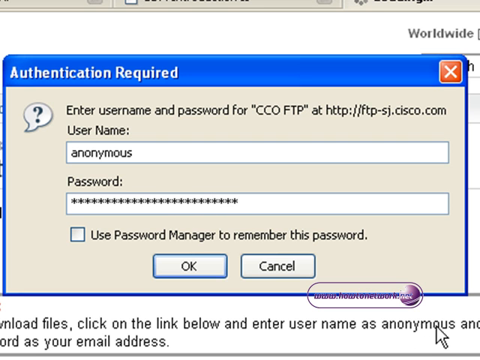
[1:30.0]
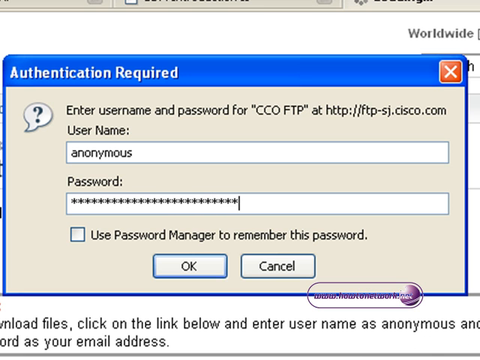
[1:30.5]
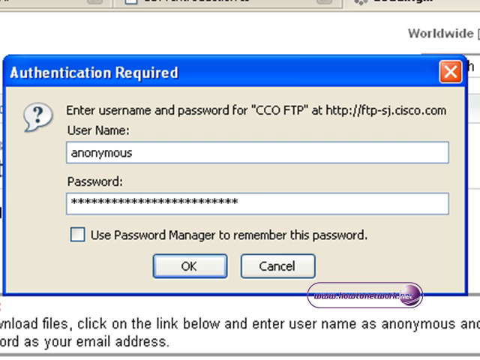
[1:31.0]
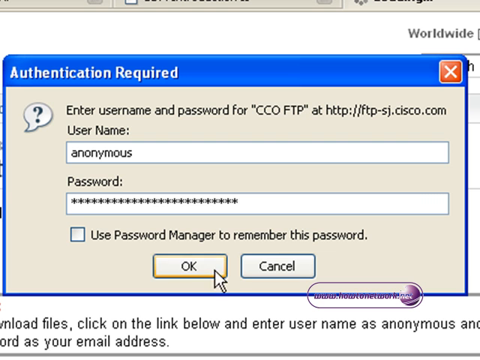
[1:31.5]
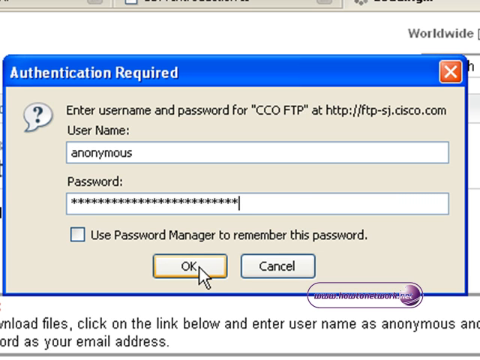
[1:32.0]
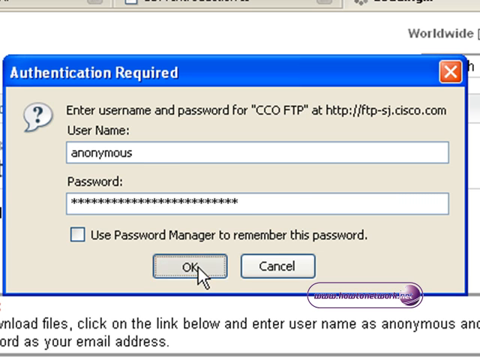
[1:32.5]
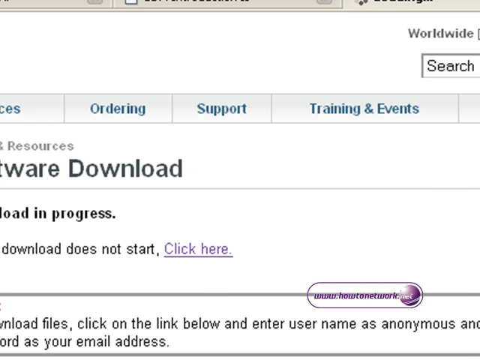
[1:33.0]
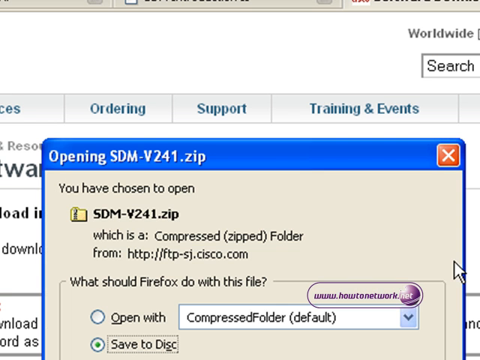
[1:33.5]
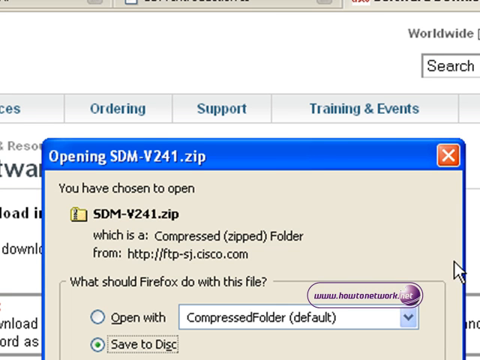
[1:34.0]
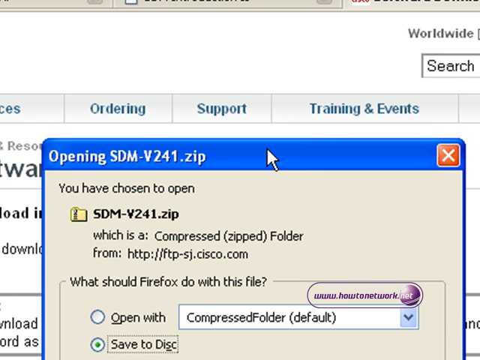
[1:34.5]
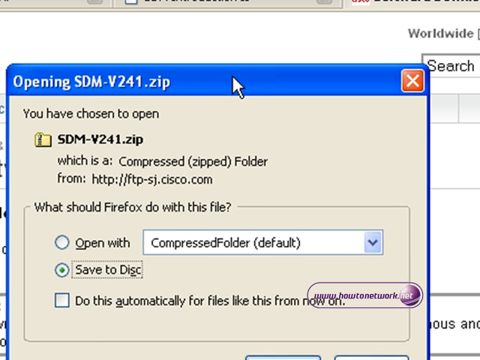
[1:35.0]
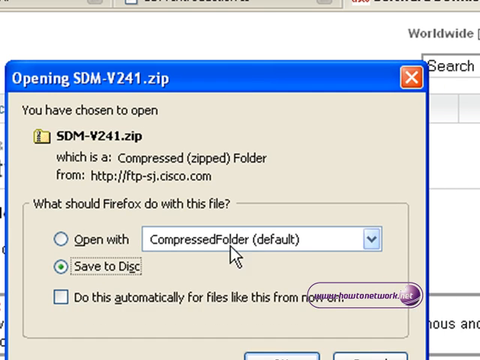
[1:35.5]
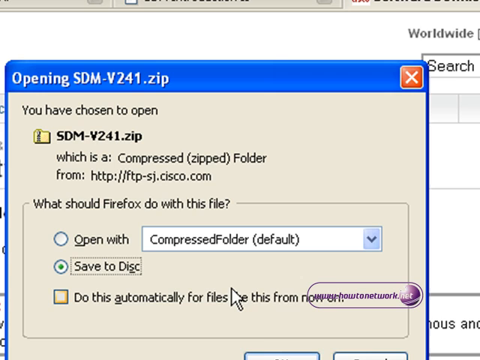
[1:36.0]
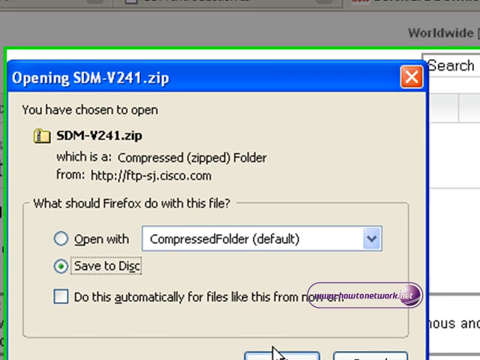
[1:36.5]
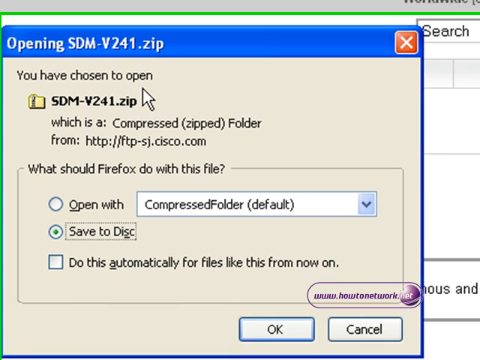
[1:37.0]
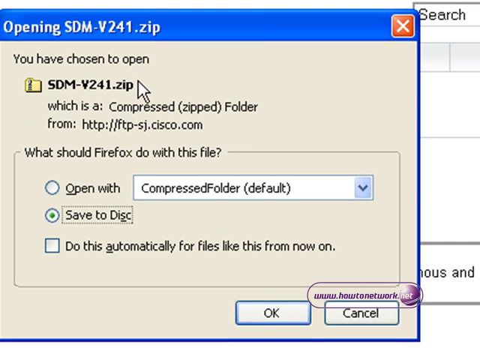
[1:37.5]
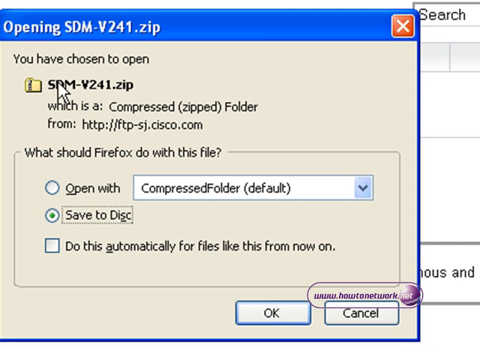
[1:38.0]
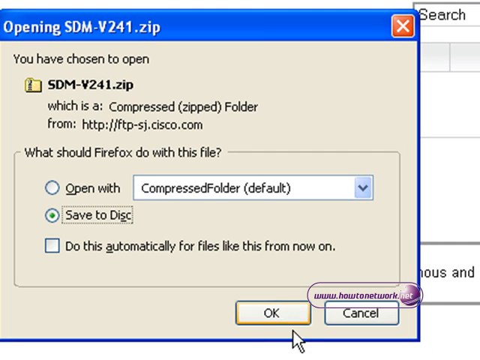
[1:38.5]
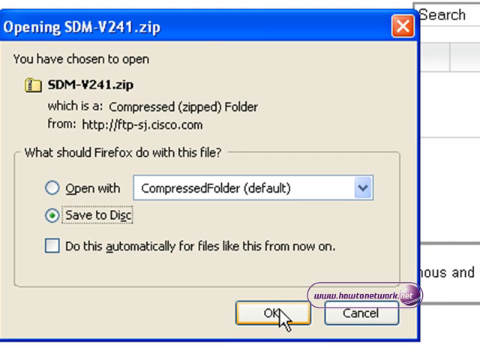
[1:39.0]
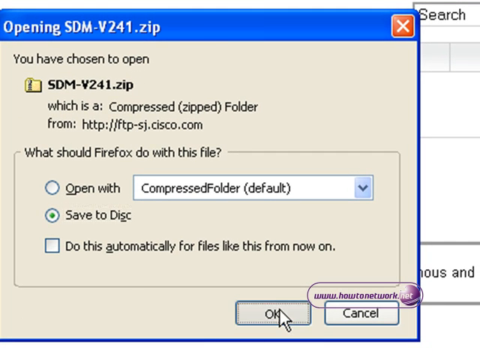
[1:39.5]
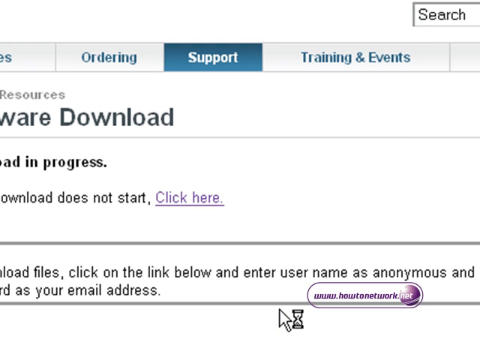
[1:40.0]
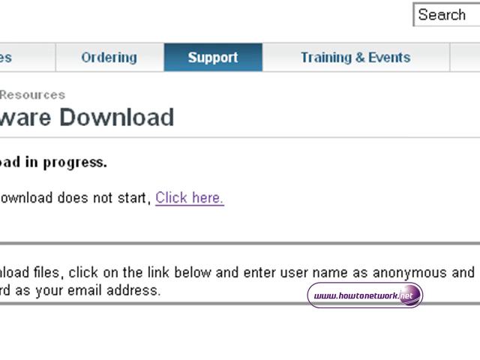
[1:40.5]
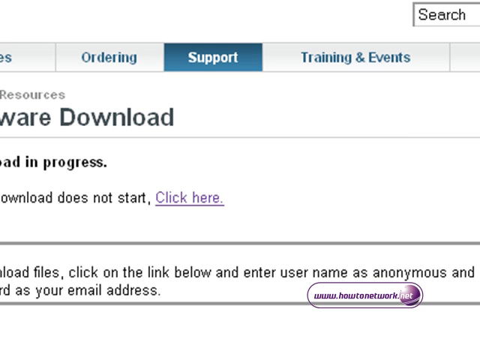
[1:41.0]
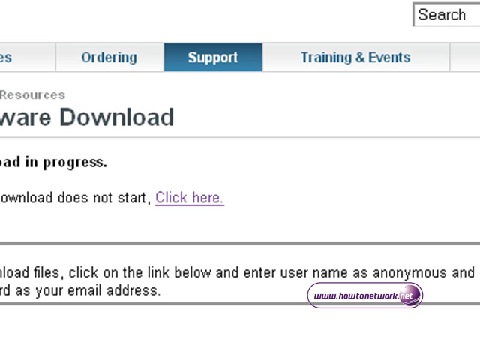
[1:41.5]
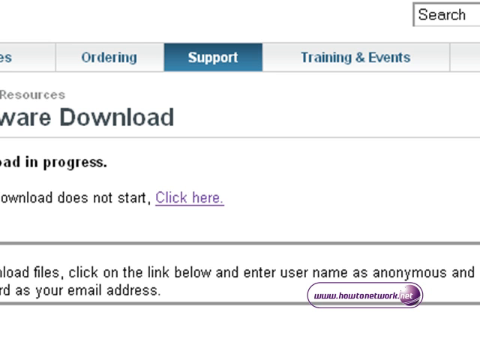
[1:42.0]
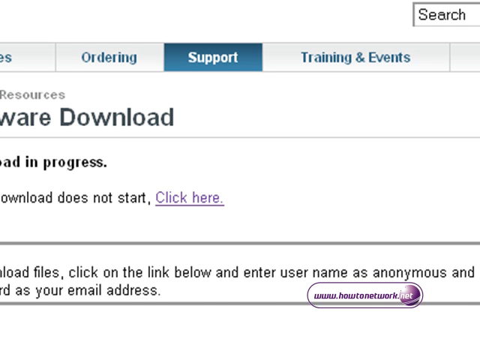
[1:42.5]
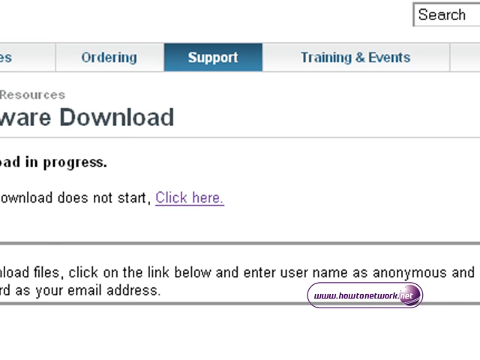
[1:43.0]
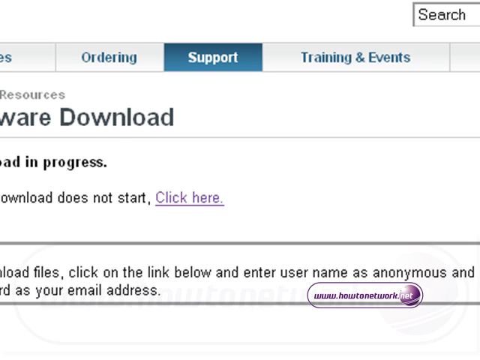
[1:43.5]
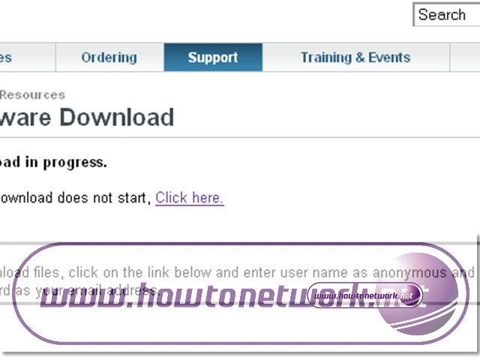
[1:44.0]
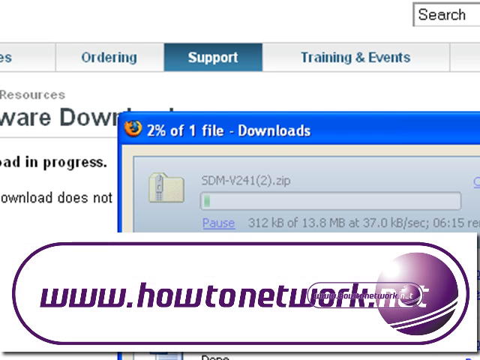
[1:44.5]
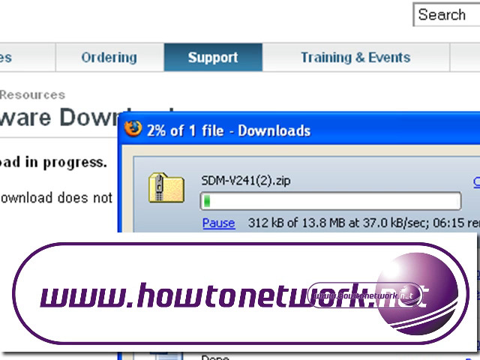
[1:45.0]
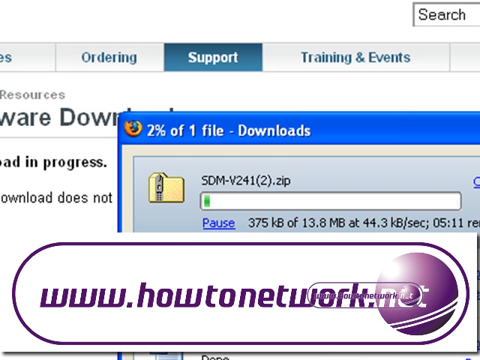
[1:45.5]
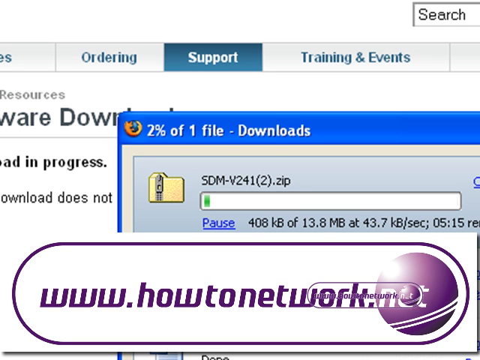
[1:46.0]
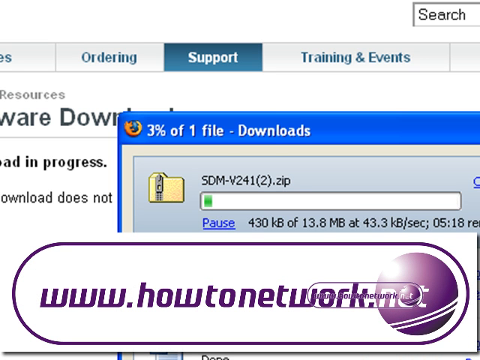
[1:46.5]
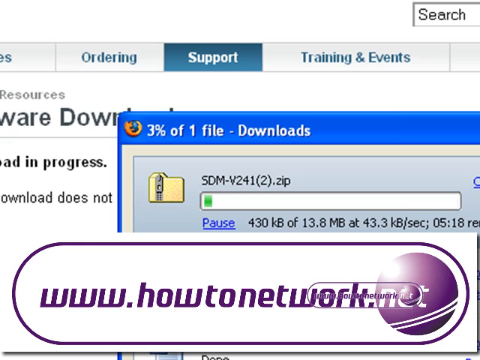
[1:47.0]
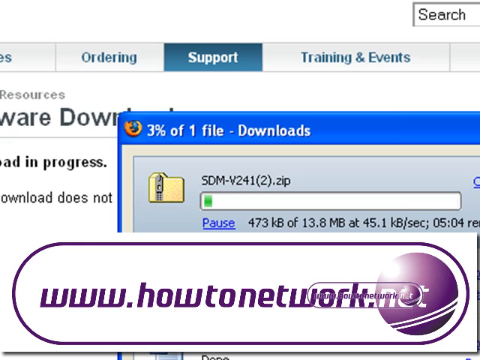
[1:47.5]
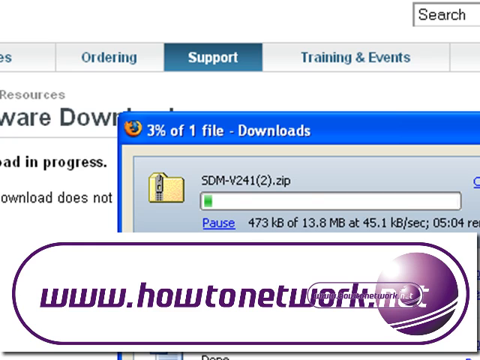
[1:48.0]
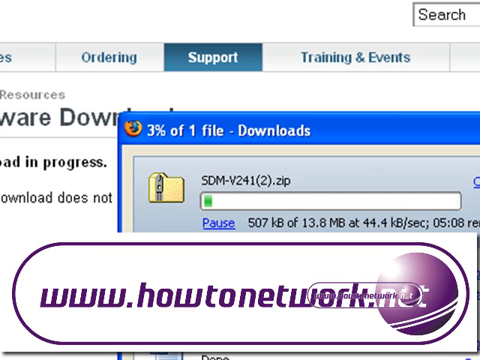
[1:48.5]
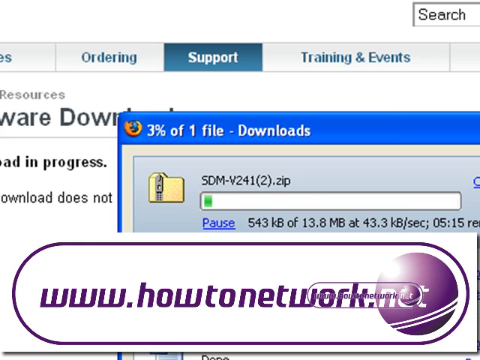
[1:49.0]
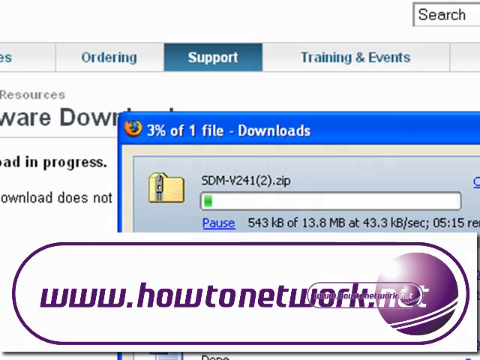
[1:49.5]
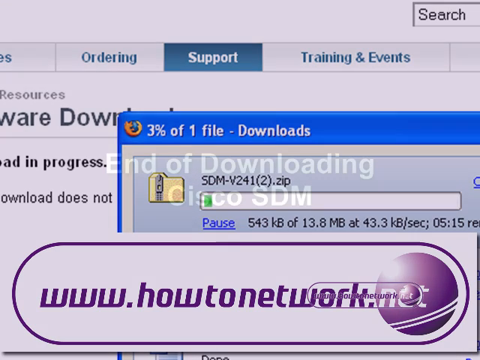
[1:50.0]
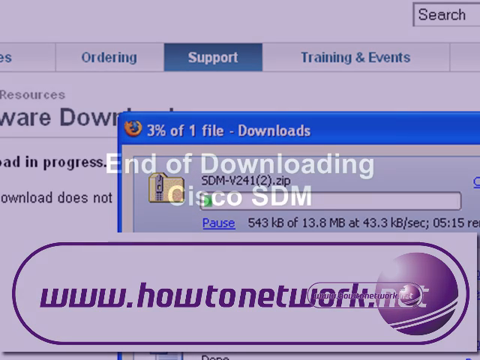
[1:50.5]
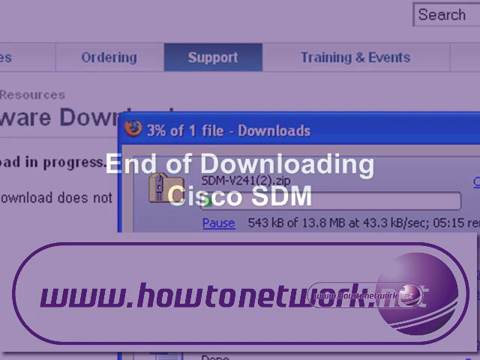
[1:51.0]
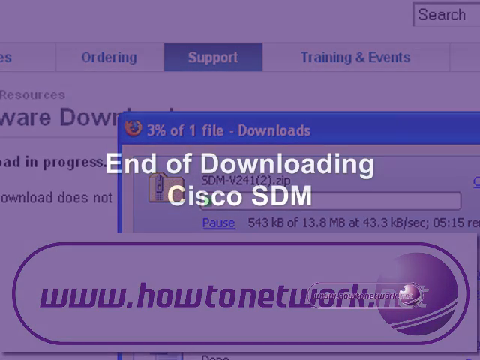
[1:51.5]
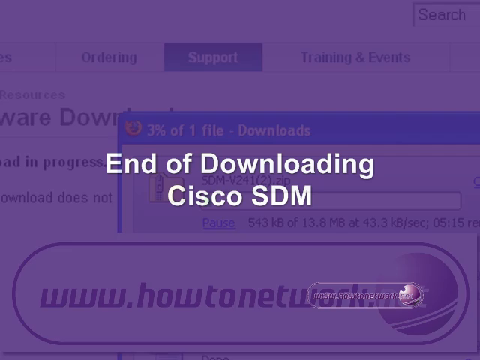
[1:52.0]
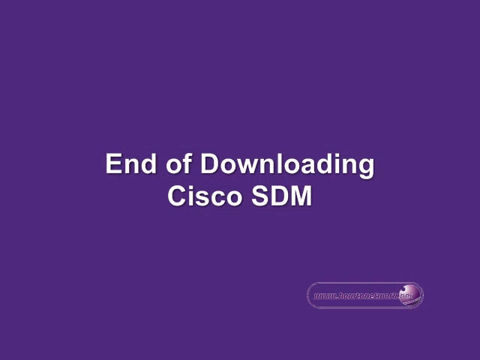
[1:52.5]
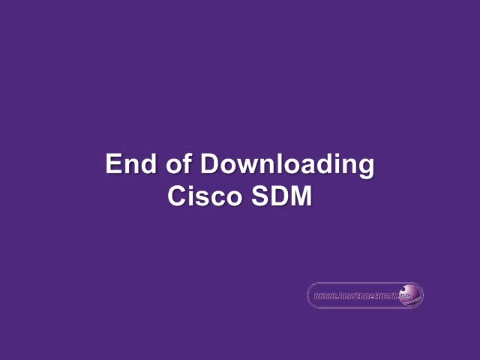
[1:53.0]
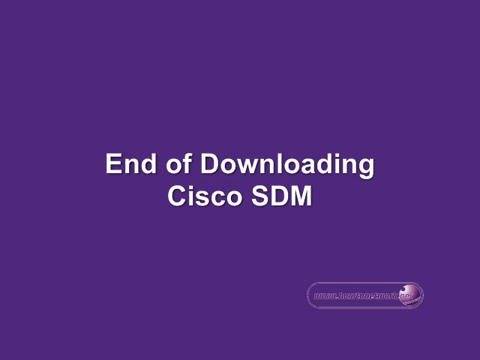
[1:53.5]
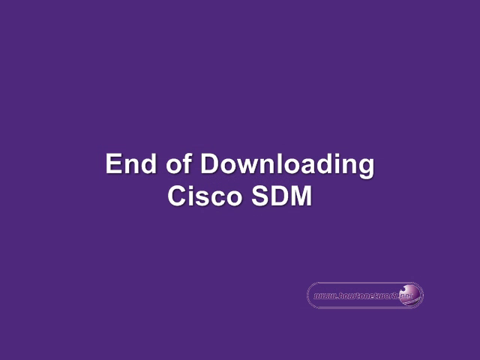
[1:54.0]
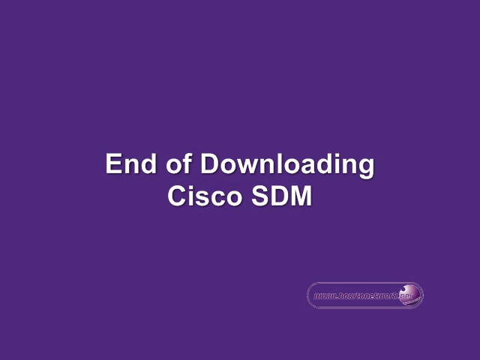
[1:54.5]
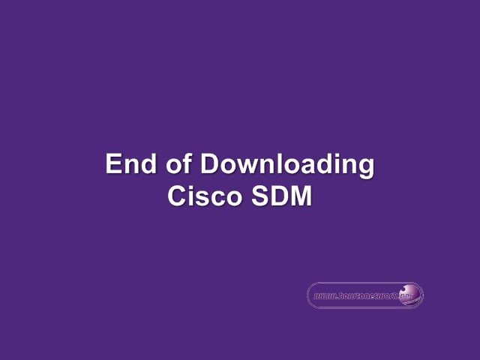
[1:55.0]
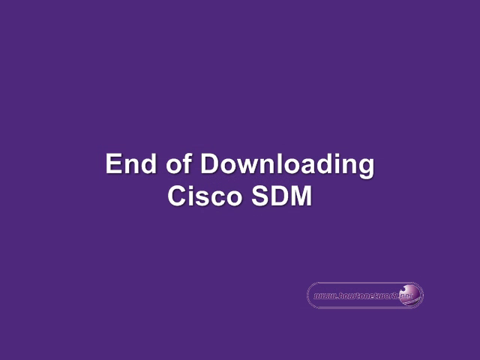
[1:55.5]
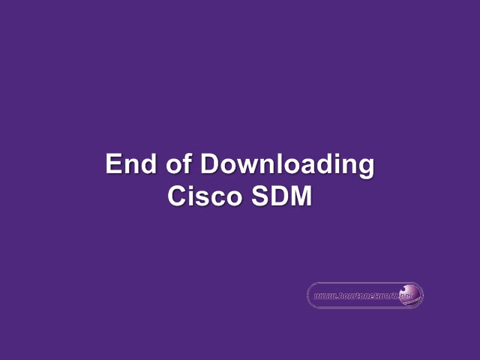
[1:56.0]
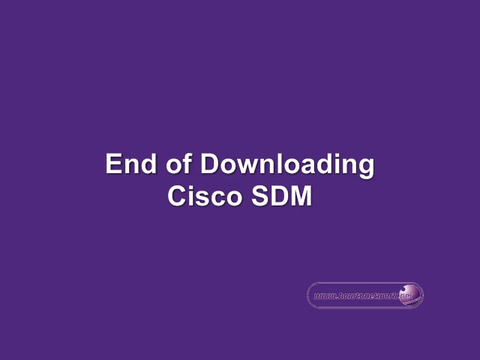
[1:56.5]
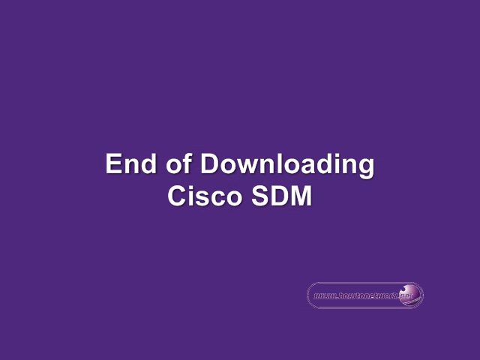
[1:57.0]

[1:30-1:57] After the password is entered, Accept is clicked and a new box opens with a blue border. At the top it says "Opening SDM-V241.zip"; the box indicates the file, a compressed zipped folder, has been chosen to open, and gives its URL. A prompt asks "what should Firefox do with this file", with options: "Open With" followed by a drop-down box, "Save to Disk", and a checkbox to "do this automatically for files like this from now on". Save to Disk is chosen, and a preview of the file downloading appears, ending the directions for downloading Cisco SDM.